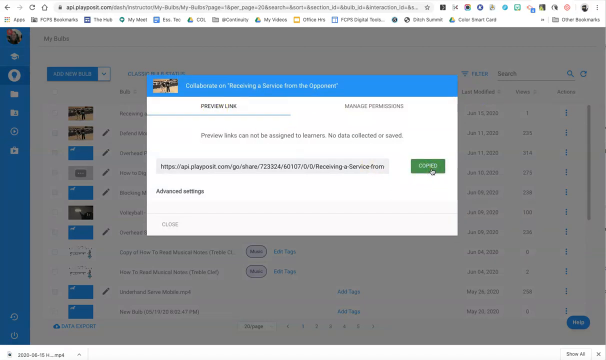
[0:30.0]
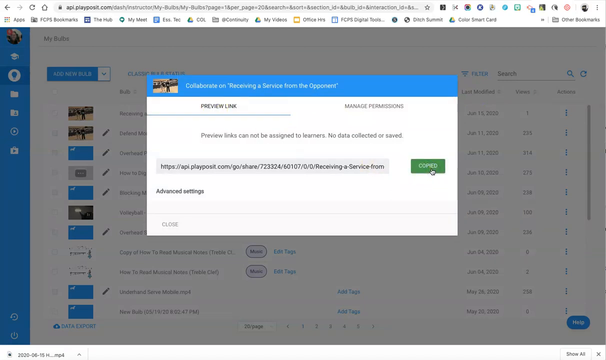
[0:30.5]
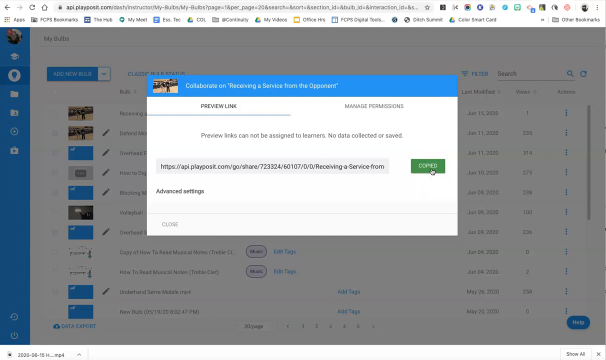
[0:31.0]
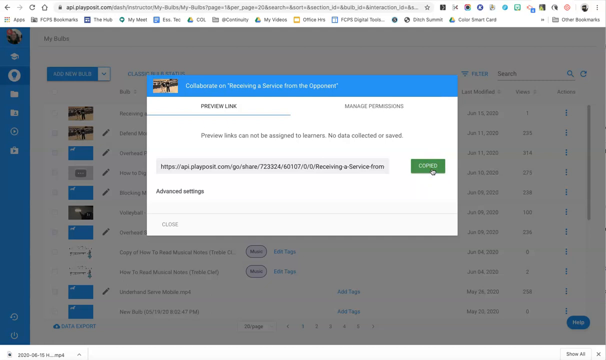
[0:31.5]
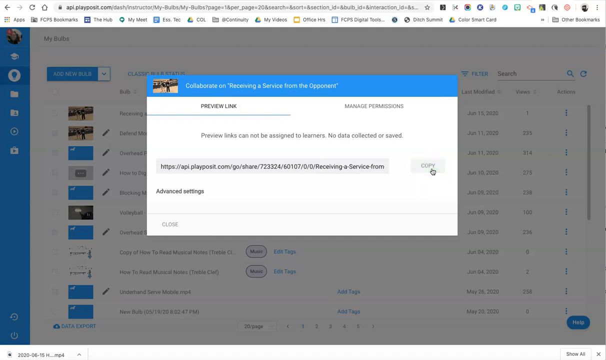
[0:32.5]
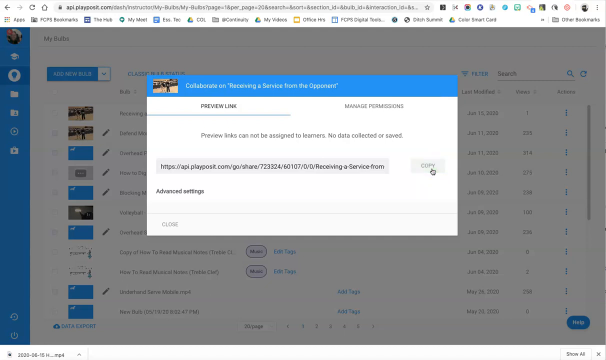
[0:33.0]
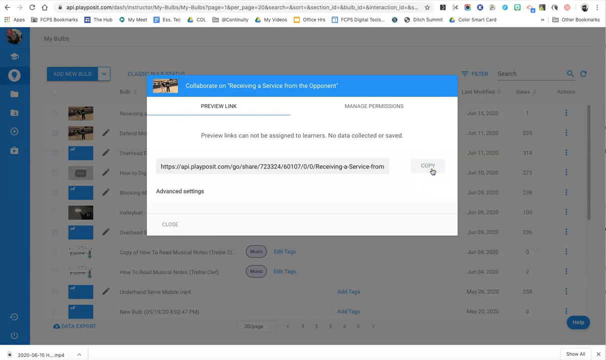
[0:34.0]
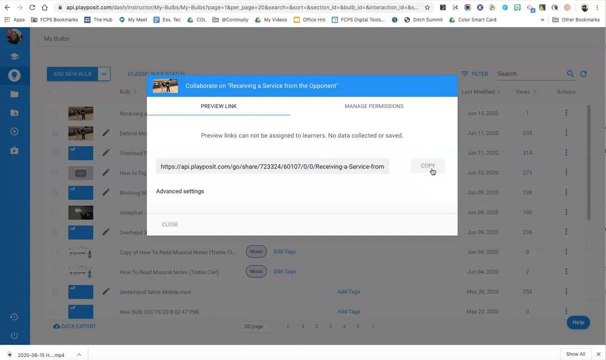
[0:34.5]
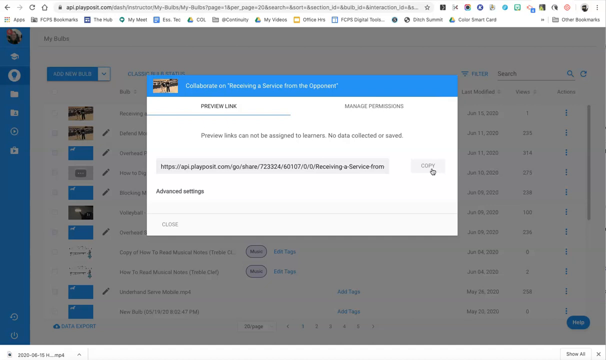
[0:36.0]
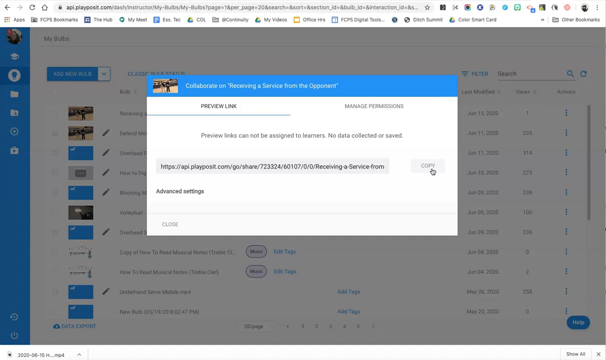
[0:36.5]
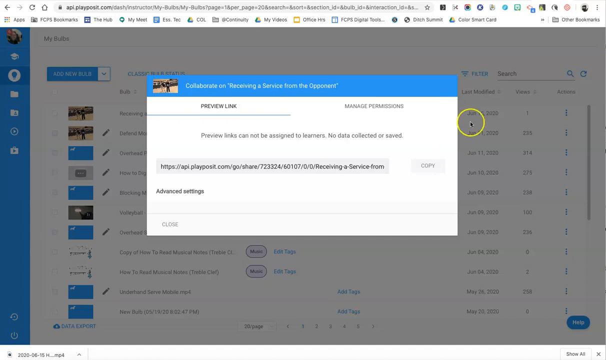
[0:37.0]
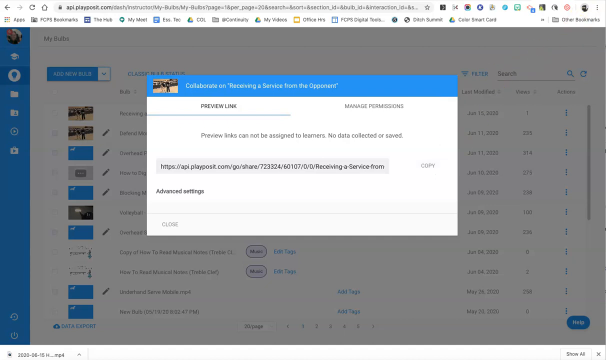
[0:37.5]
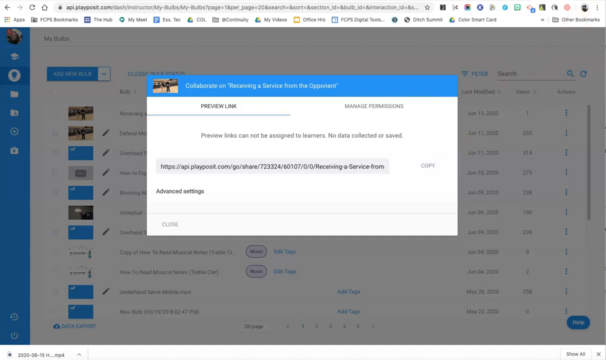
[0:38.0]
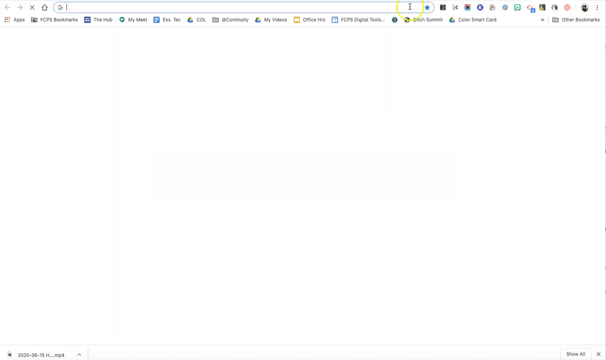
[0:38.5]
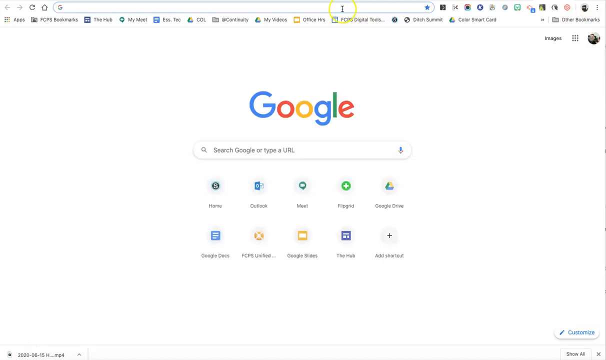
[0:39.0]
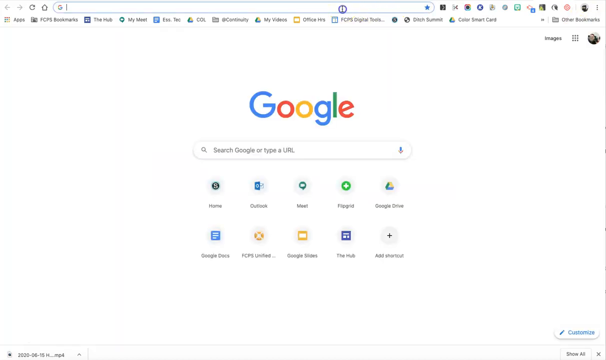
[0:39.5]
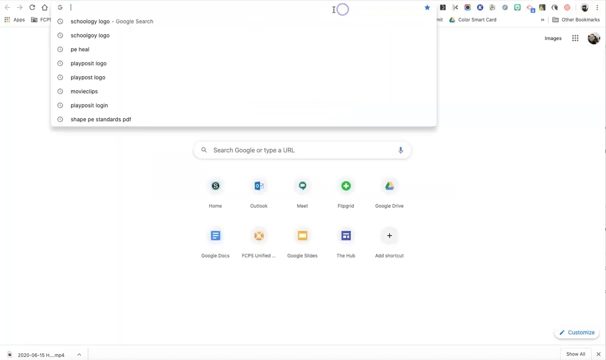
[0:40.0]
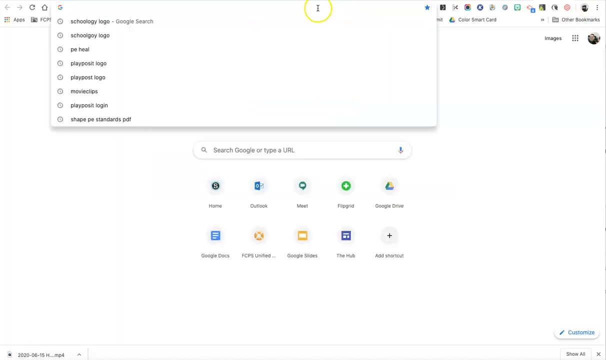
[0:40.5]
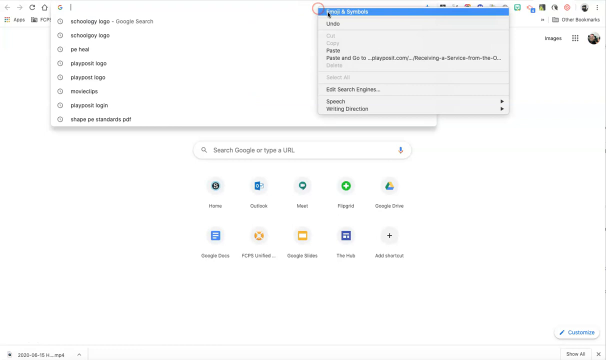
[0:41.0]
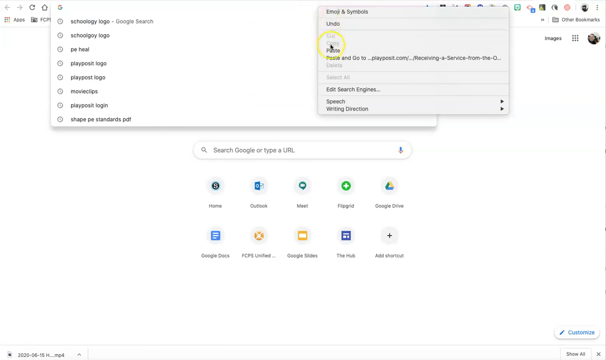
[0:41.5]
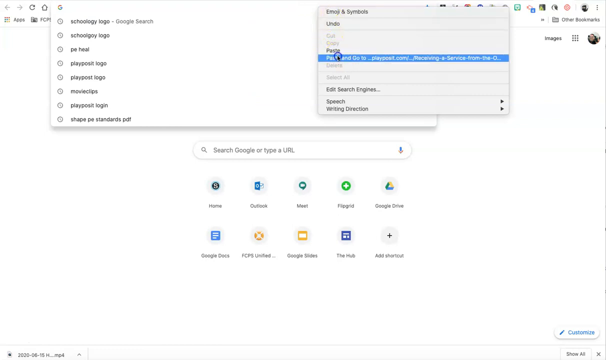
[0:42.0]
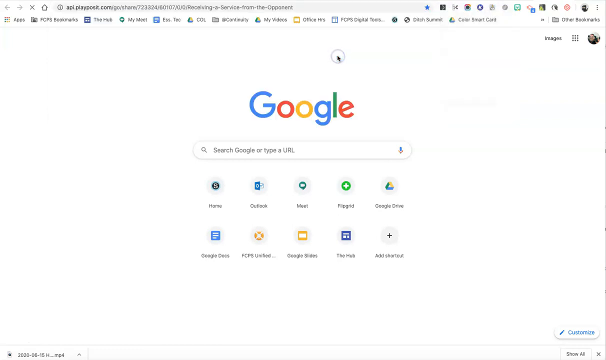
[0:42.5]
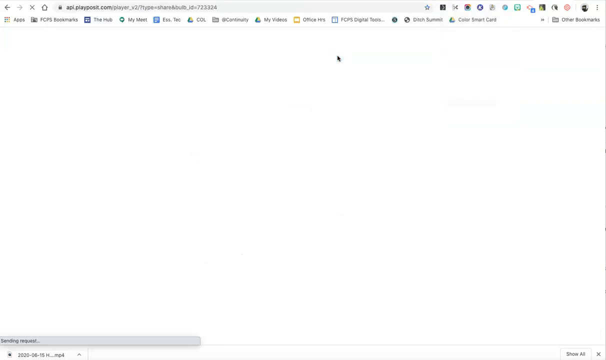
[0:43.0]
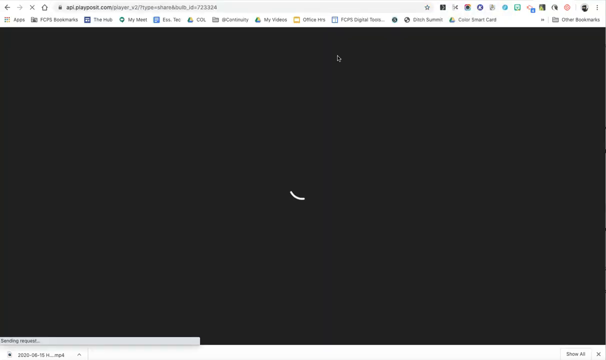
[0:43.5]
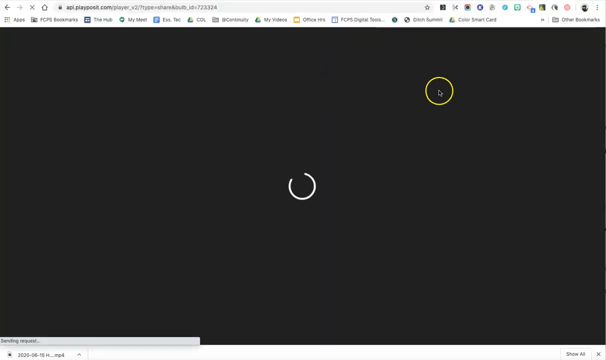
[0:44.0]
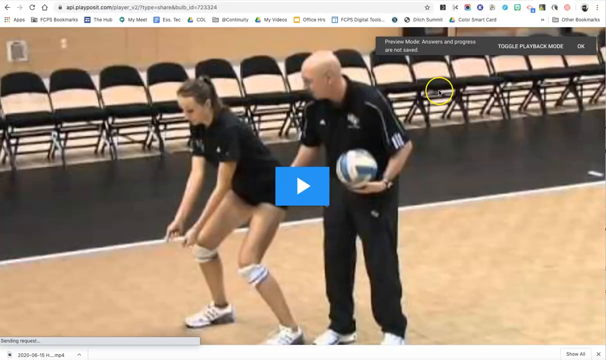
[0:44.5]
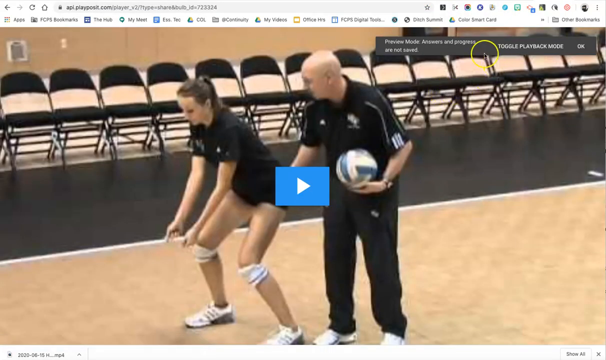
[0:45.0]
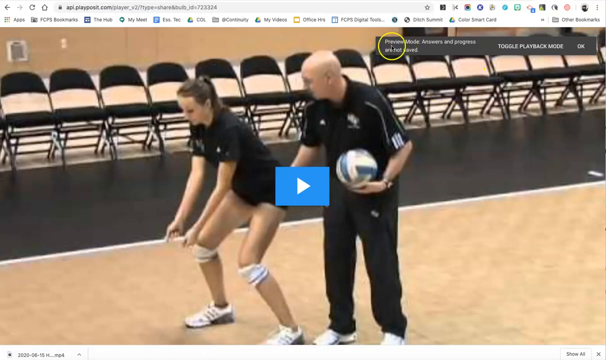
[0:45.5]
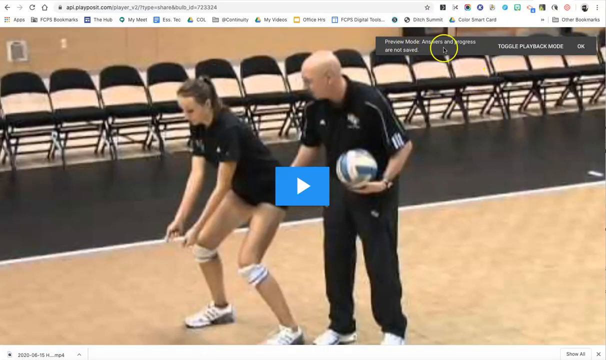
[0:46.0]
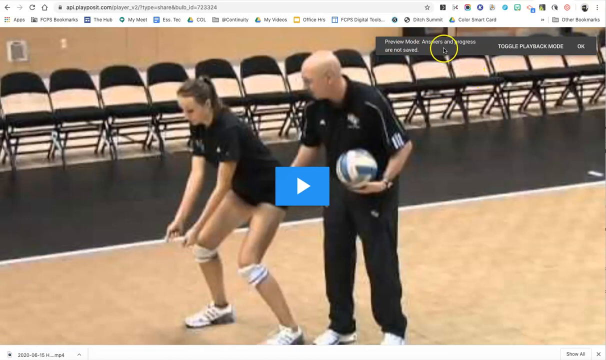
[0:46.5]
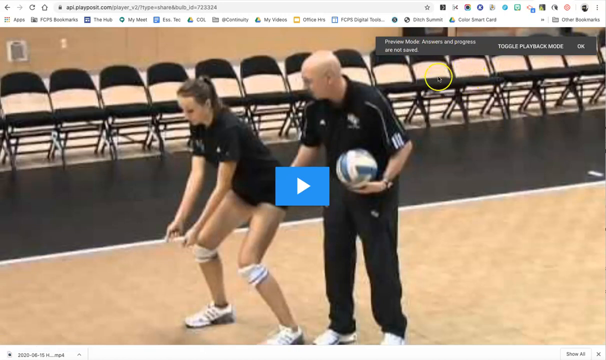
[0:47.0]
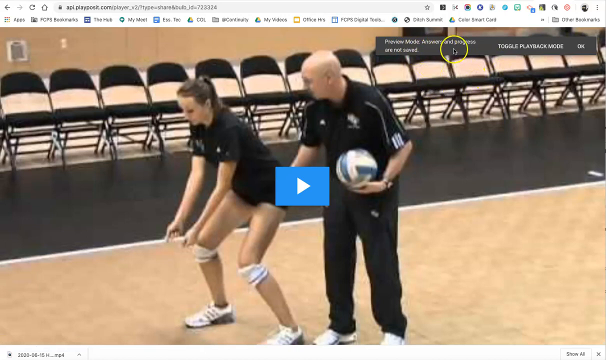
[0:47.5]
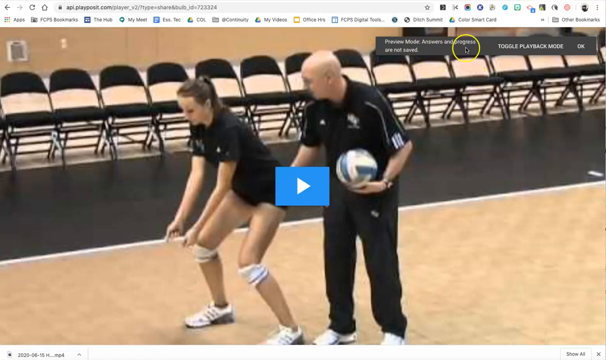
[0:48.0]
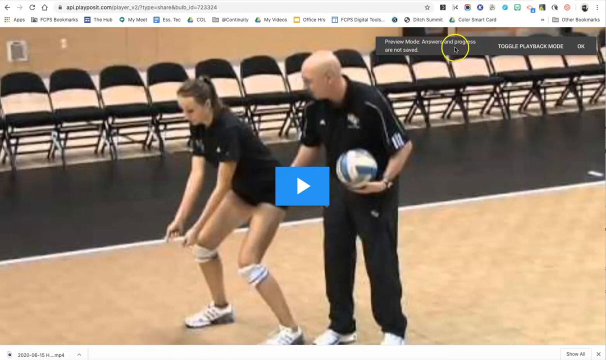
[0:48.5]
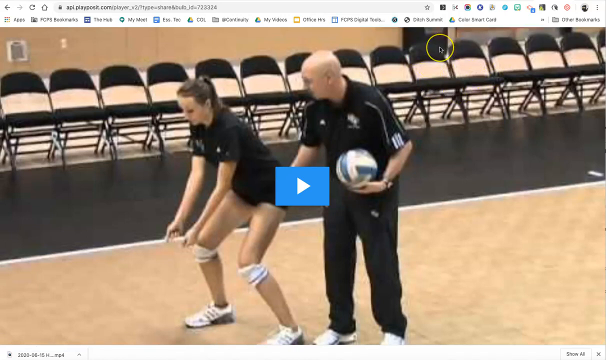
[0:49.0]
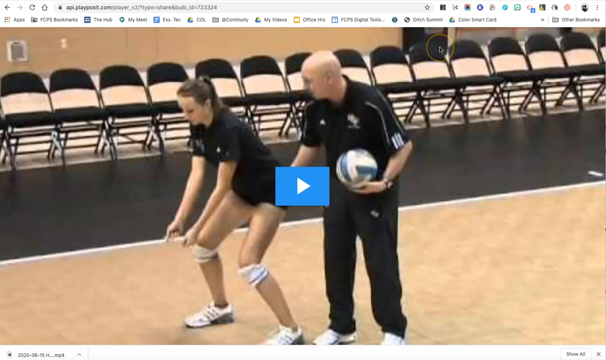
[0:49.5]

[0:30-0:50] A page with a blue and white pop-up window appears. A thin blue banner runs across the top, containing what appears to be a small box with a preview of a video; next to it in white is the text "Collaborate on 'receiving a service from the opponent'". It looks to be a clip about volleyball. Below the blue banner is a gray dialog box offering two choices, Preview Link and Manage Permissions. Preview Link has been clicked, and the text reads "Preview Links cannot be assigned to learners. No data collected or saved." Below that is a hyperlink box with a Copy option for the link, followed by "Advanced Settings". In the bottom left-hand corner of the dialog box is the word "Close", with a shadowy gray over it. The mouse hovers over Copy and clicks it, and it changes from green to gray. The mouse then moves up to Chrome's address bar, right-clicks on it, erases what was in the address bar and pastes in the copied link to the video.